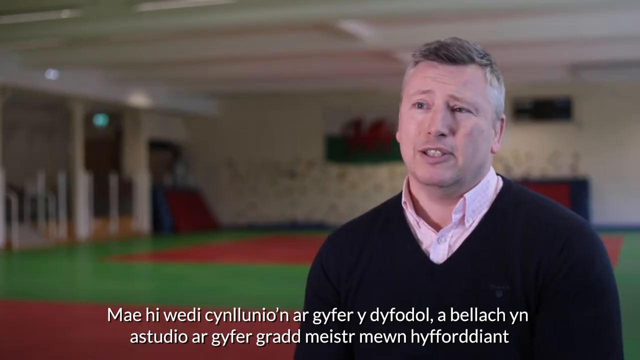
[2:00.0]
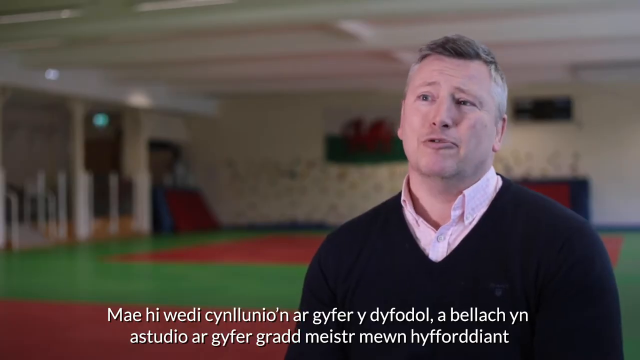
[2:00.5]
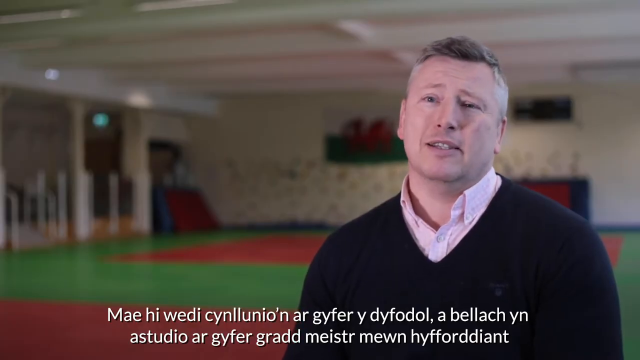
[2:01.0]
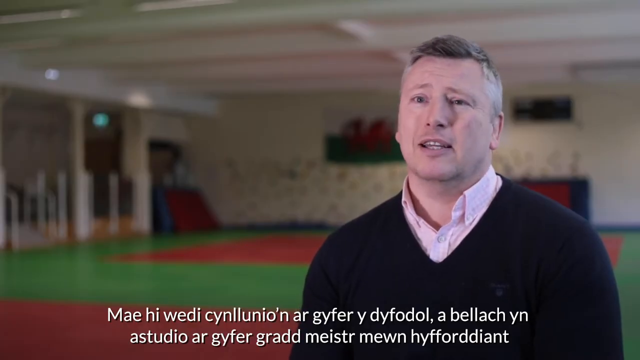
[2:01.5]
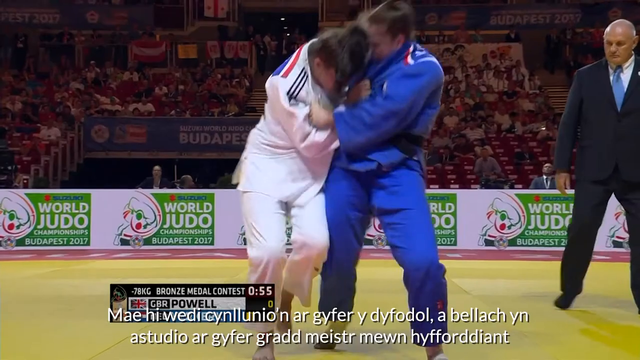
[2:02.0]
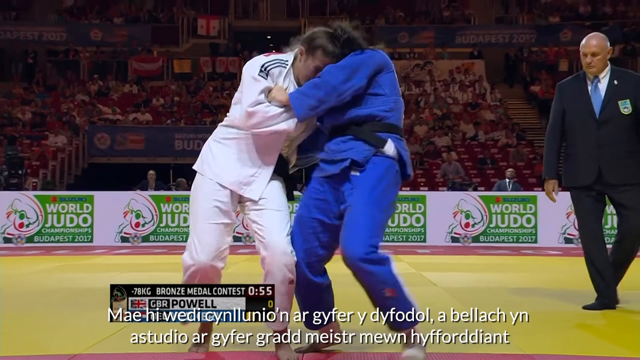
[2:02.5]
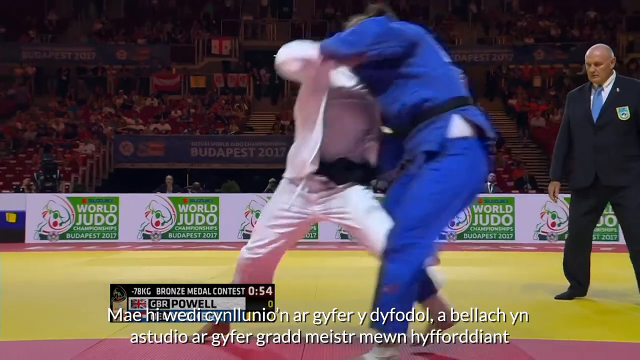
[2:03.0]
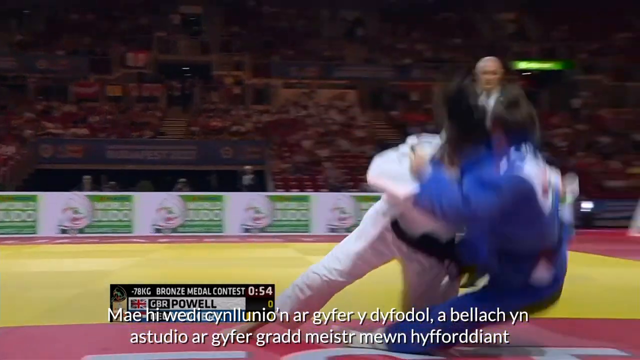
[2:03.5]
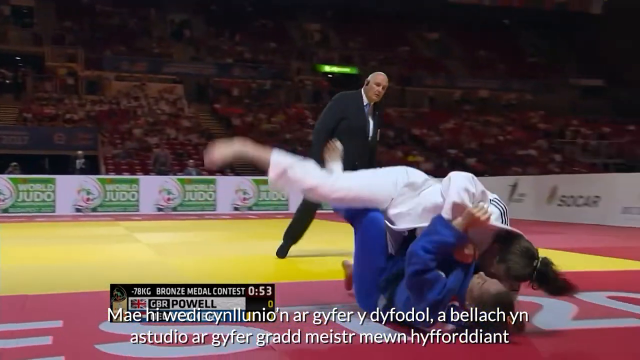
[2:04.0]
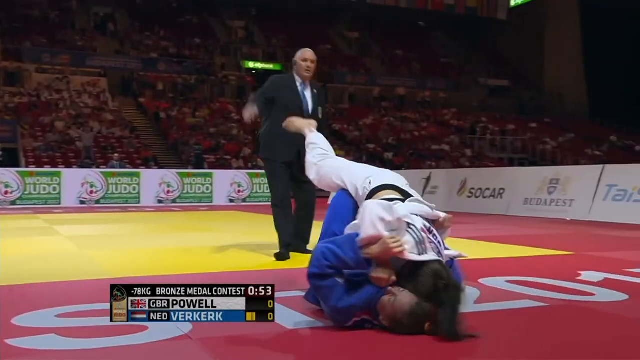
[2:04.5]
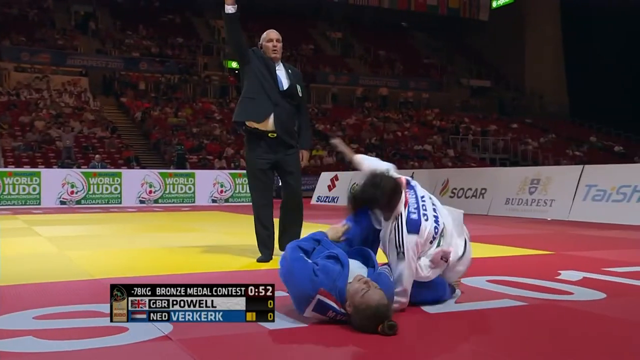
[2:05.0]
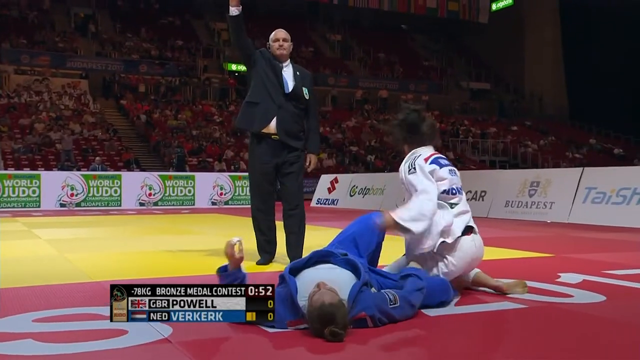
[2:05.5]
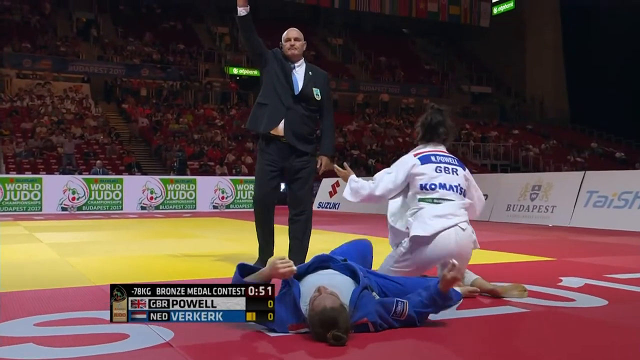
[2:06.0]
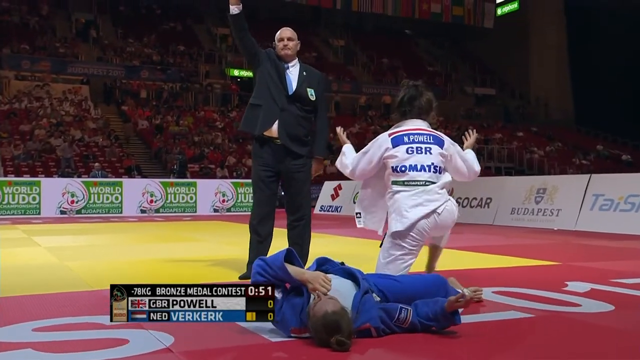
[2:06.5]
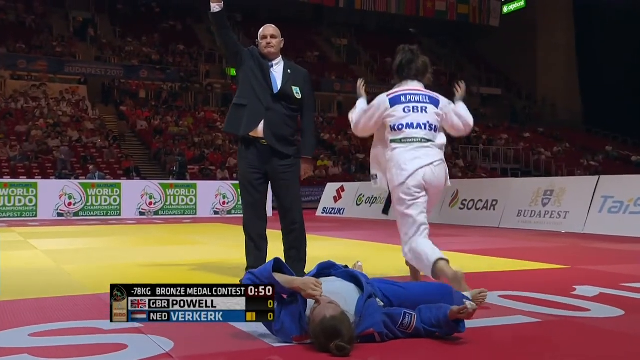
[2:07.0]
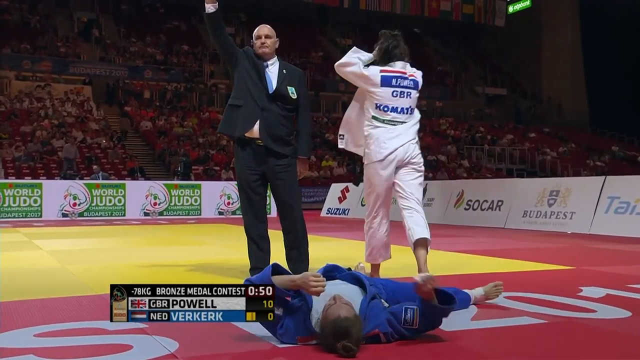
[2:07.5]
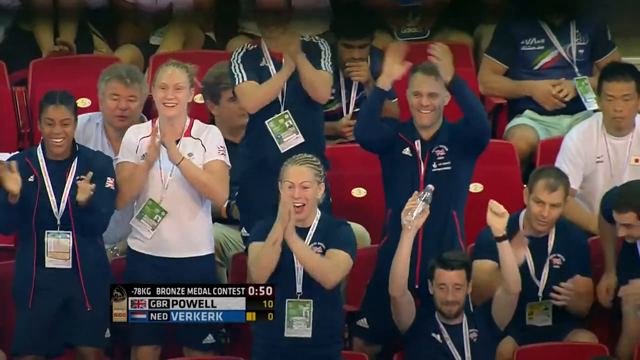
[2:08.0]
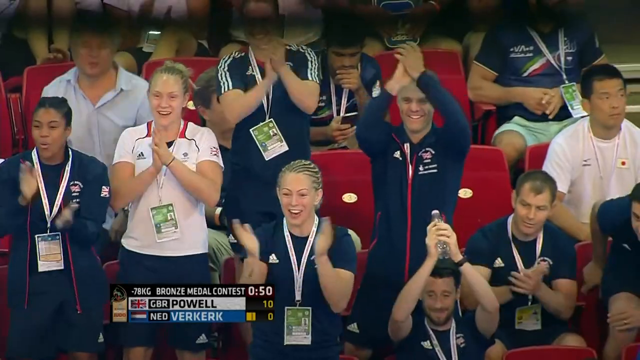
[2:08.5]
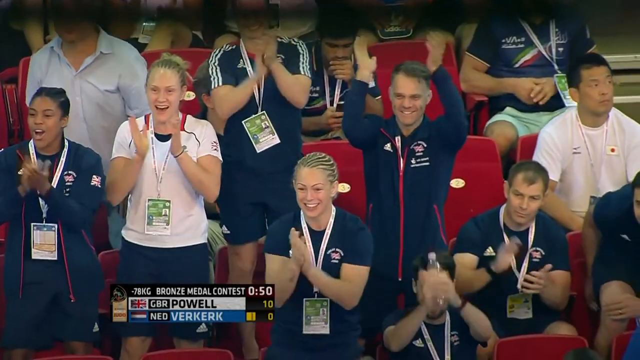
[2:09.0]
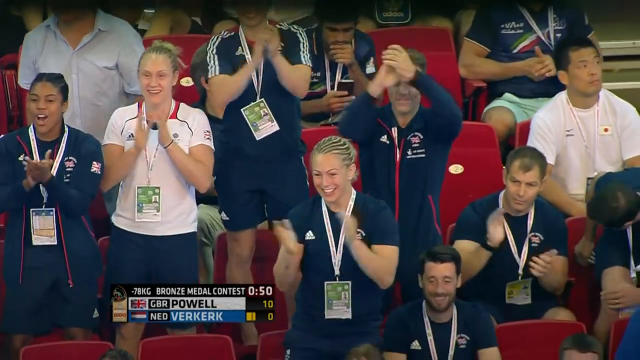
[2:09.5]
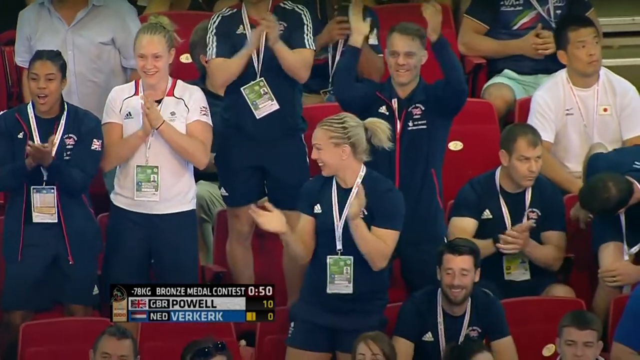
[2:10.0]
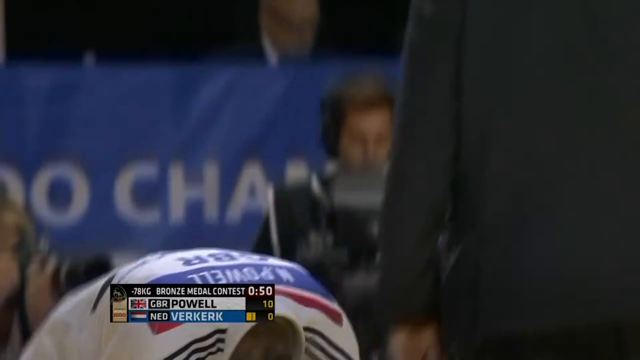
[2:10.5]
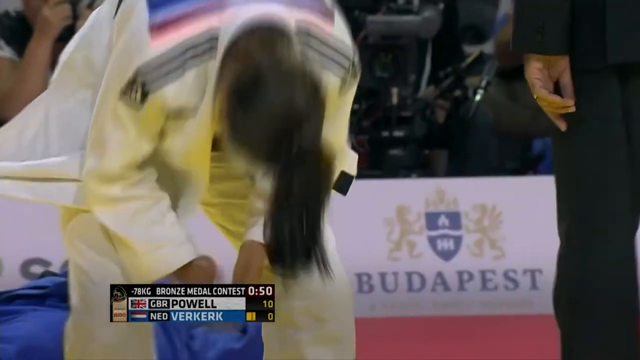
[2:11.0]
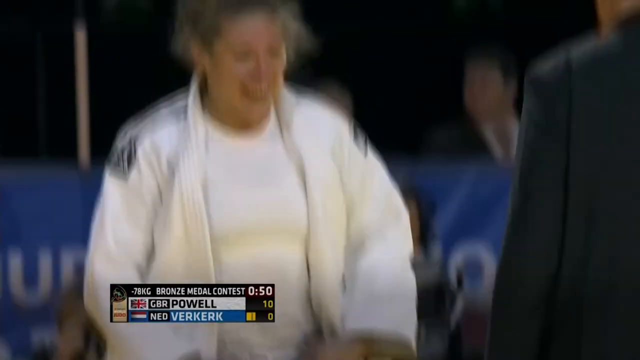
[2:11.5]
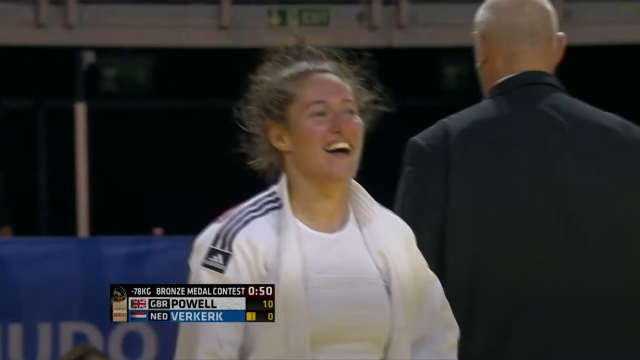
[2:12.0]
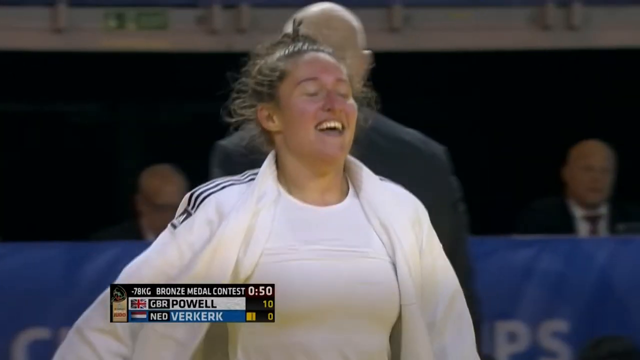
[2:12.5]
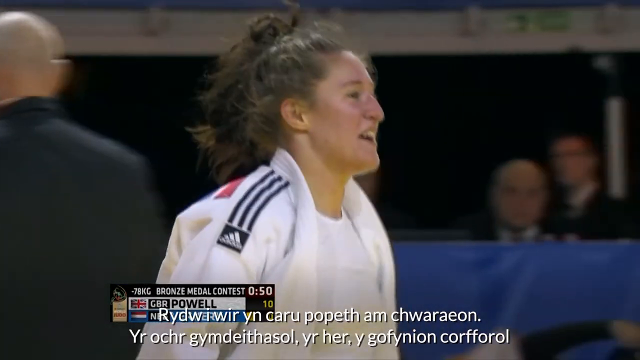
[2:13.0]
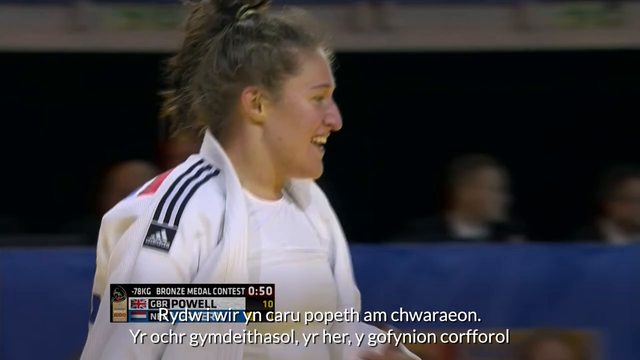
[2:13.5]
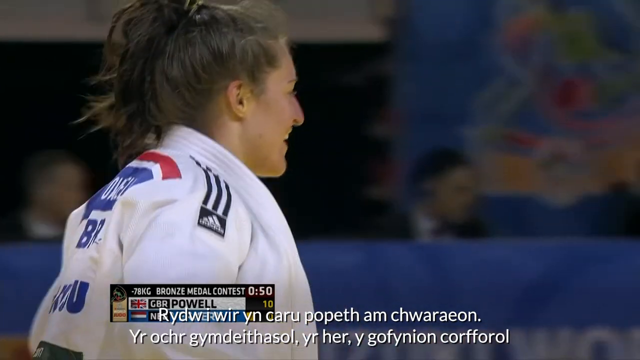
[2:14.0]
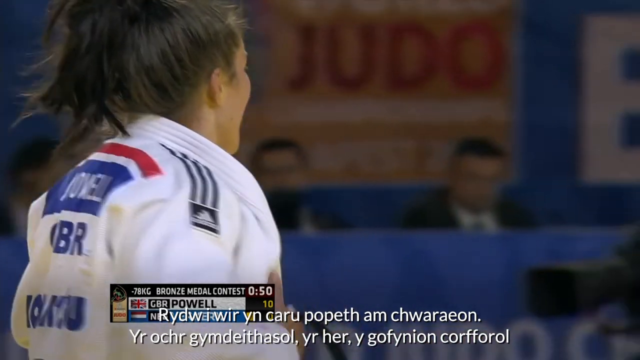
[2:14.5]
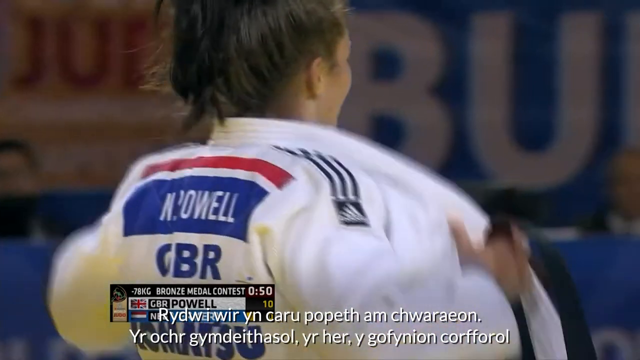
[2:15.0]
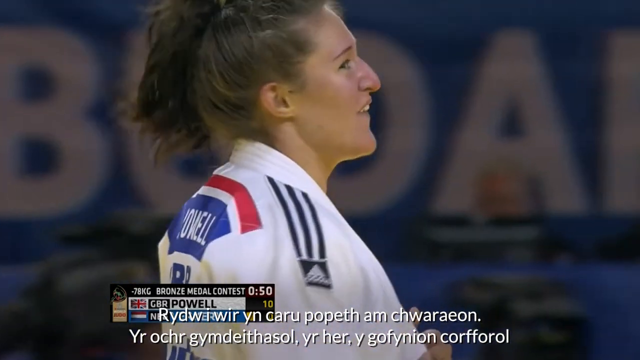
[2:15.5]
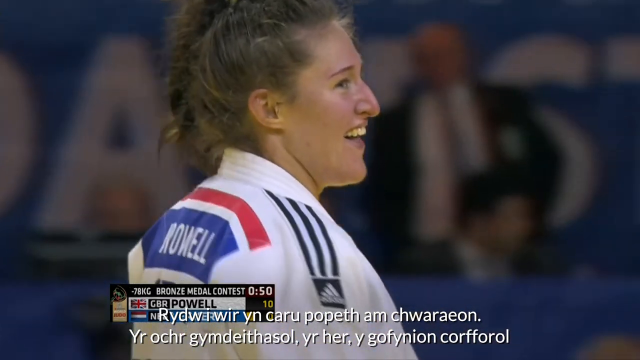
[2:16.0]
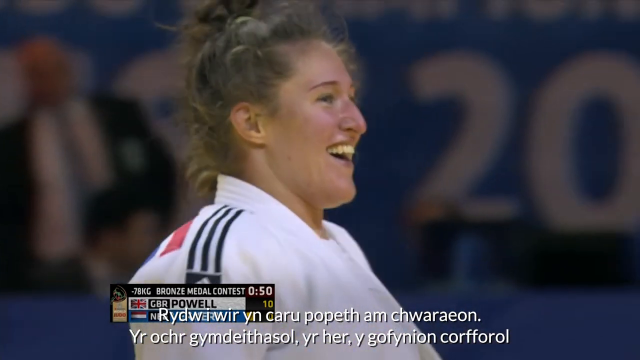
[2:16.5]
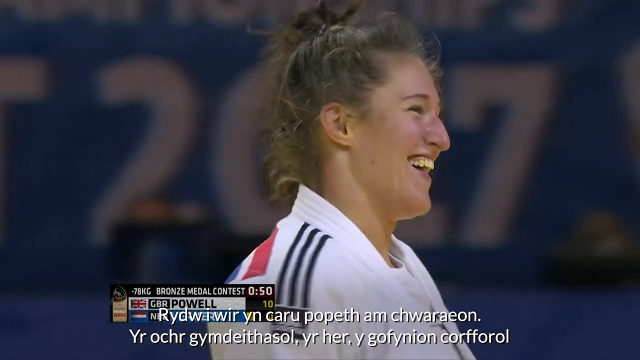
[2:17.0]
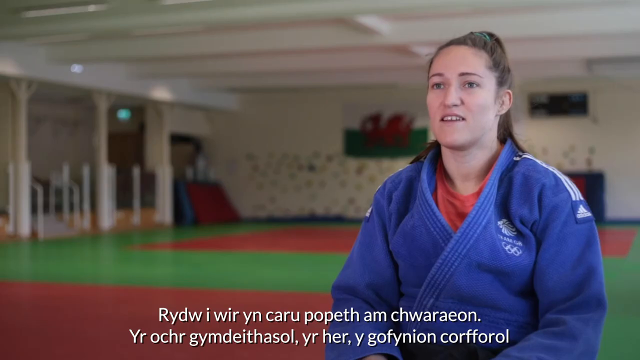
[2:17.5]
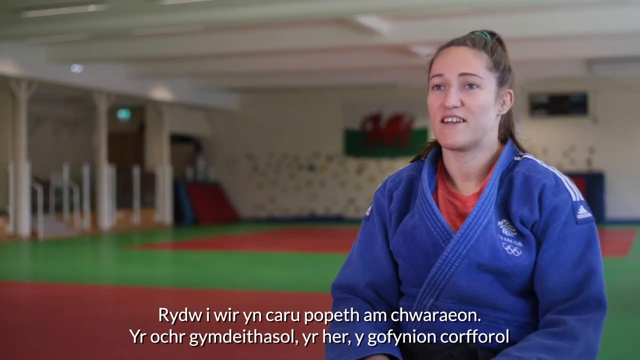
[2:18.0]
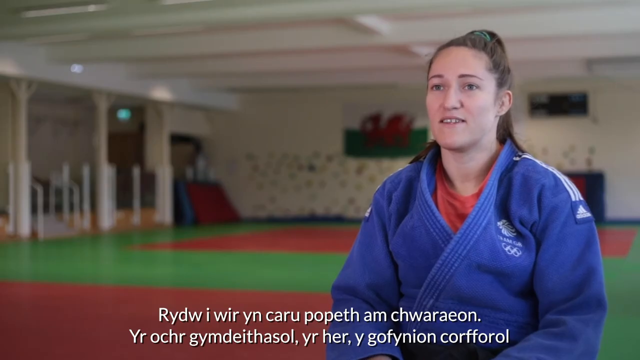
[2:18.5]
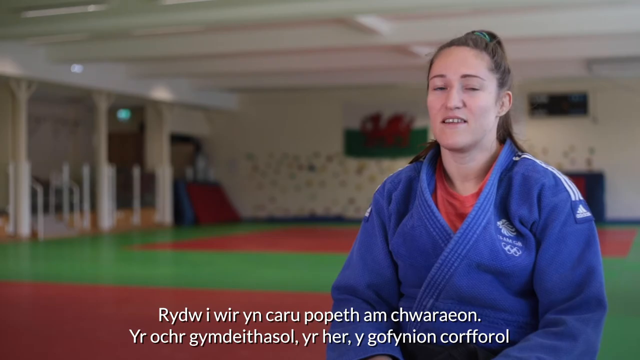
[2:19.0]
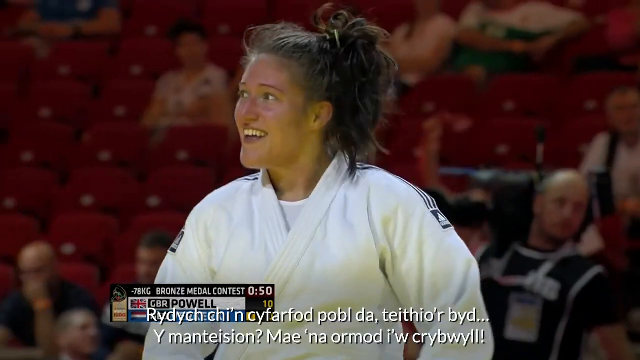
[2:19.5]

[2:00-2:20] Two teams compete against each other in jujutsu matches. The fighters try to hit each other inside a building.